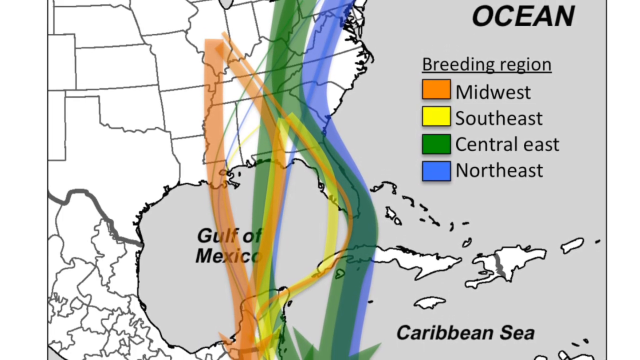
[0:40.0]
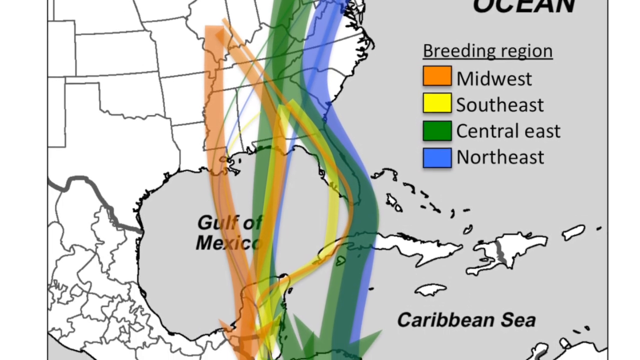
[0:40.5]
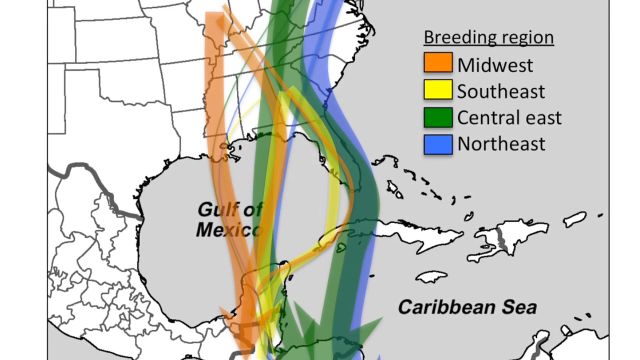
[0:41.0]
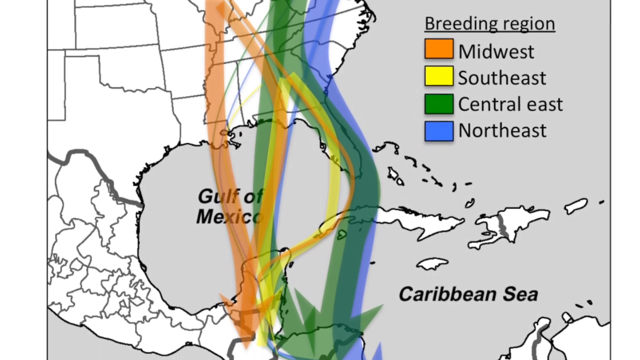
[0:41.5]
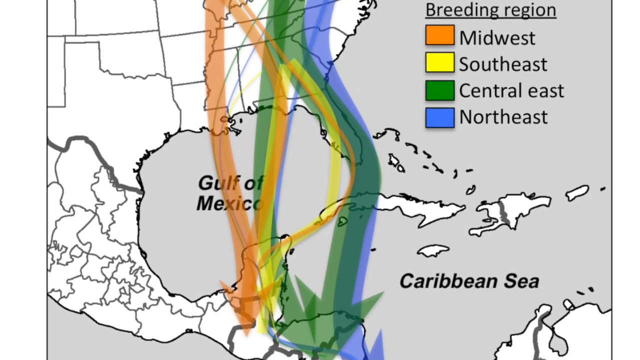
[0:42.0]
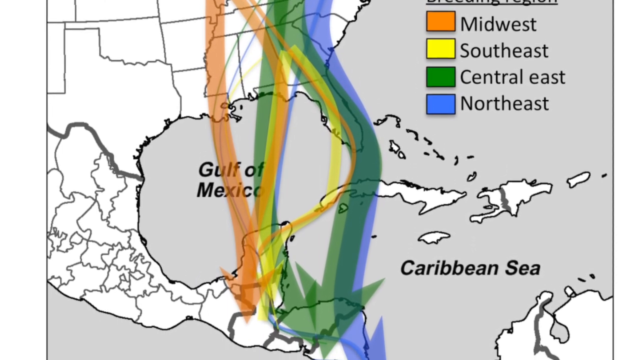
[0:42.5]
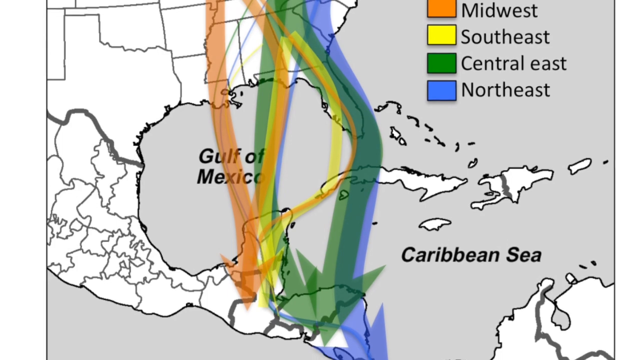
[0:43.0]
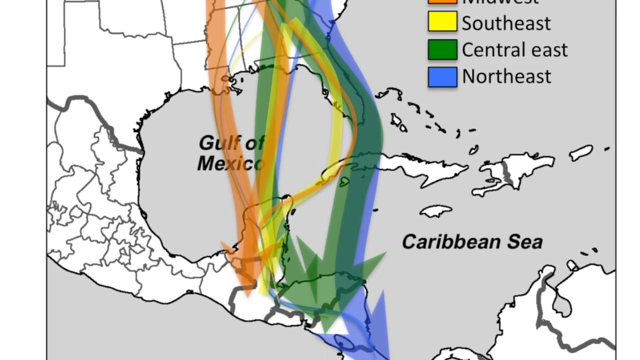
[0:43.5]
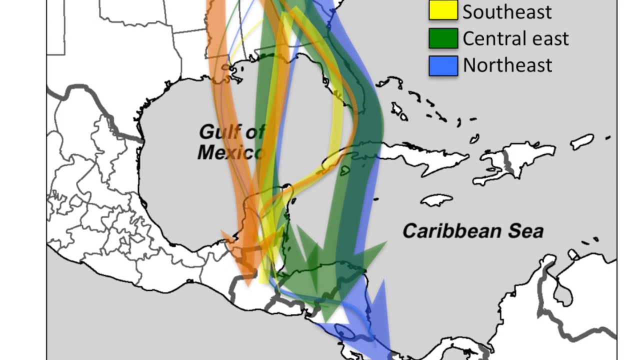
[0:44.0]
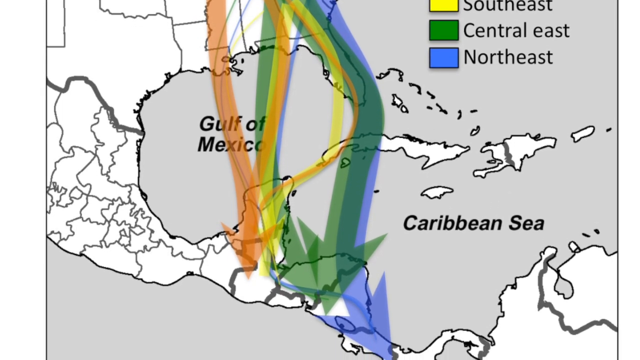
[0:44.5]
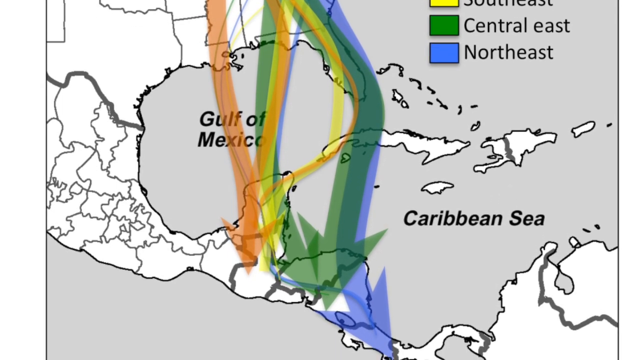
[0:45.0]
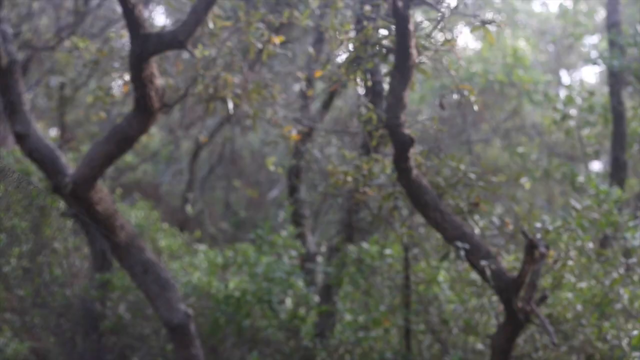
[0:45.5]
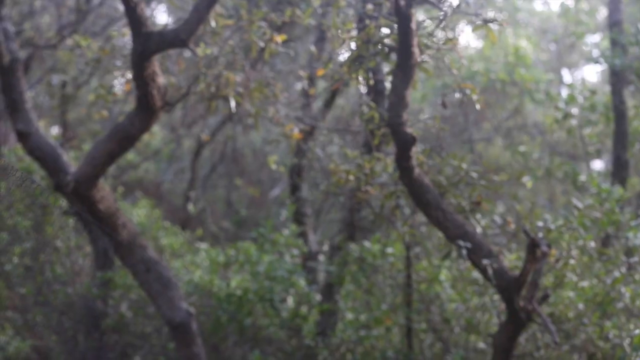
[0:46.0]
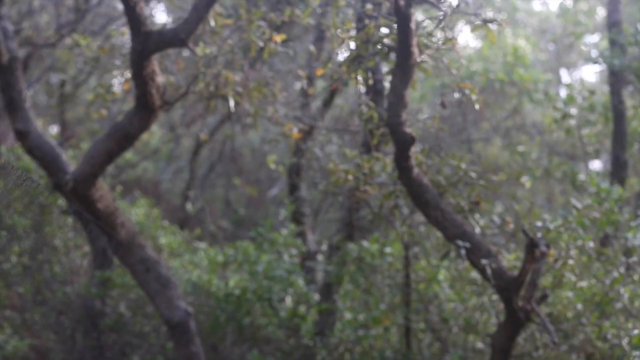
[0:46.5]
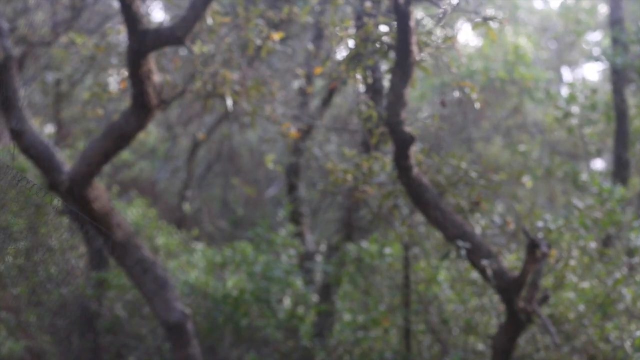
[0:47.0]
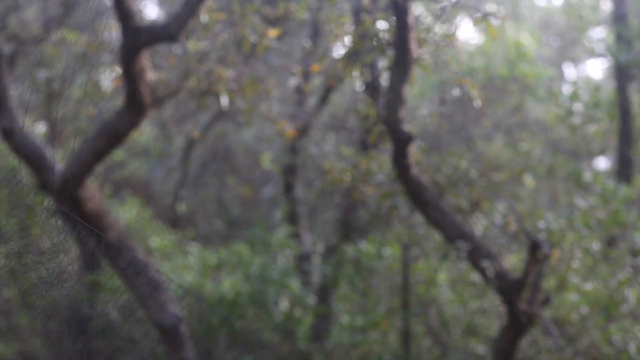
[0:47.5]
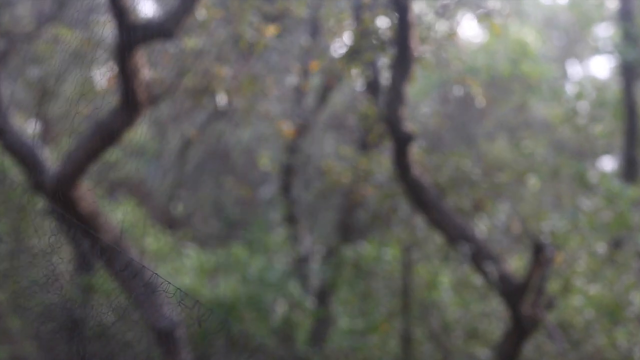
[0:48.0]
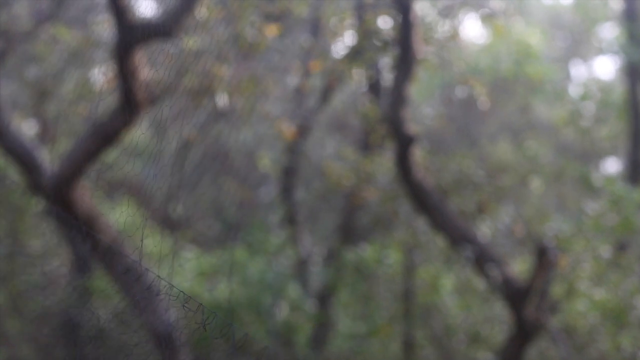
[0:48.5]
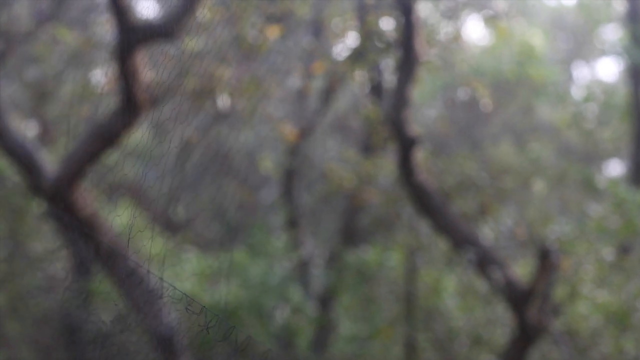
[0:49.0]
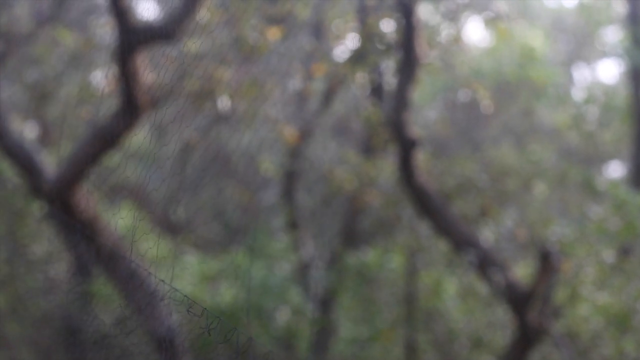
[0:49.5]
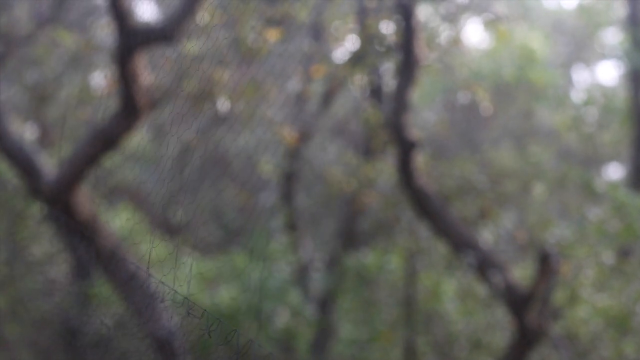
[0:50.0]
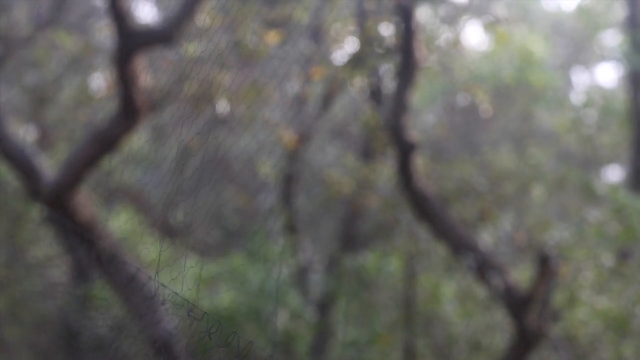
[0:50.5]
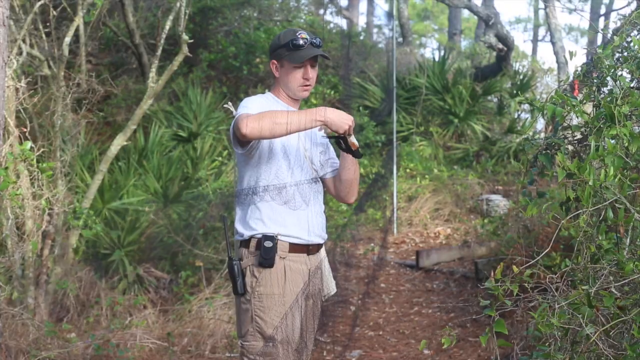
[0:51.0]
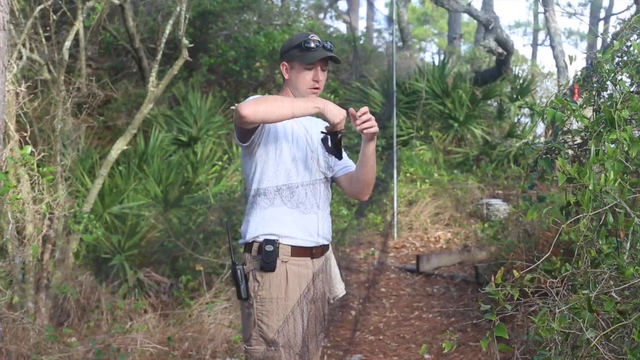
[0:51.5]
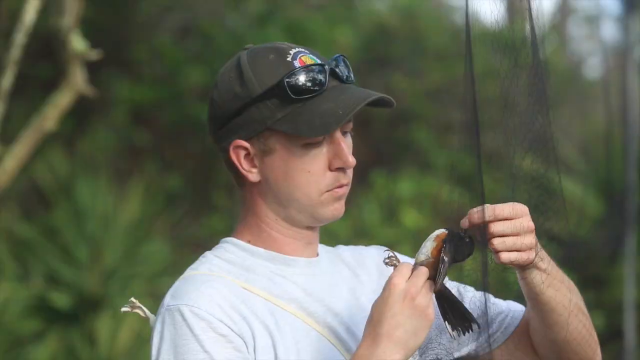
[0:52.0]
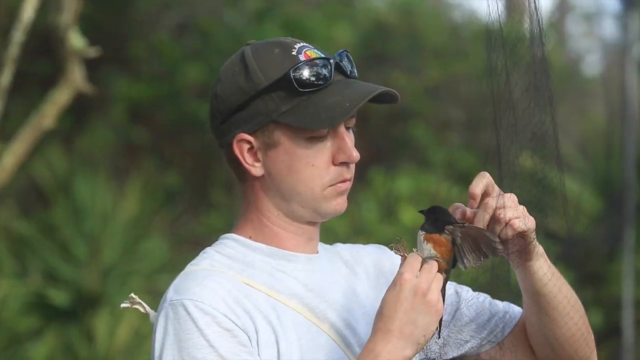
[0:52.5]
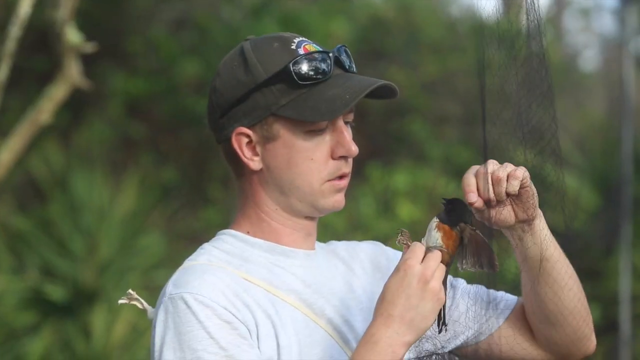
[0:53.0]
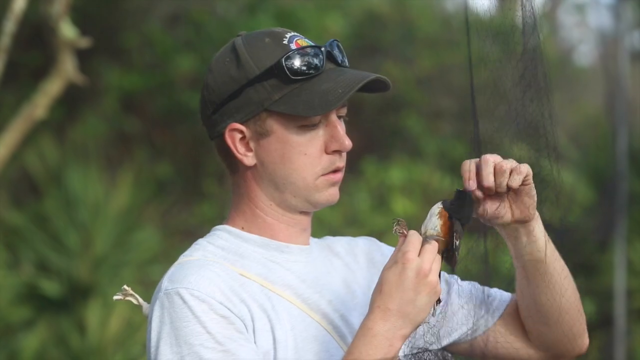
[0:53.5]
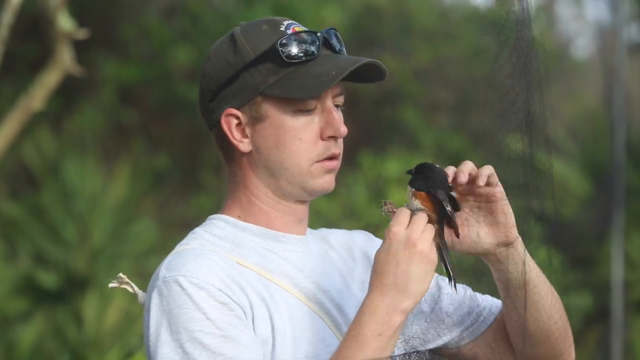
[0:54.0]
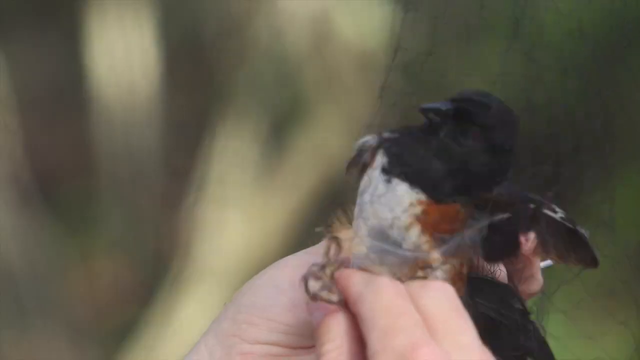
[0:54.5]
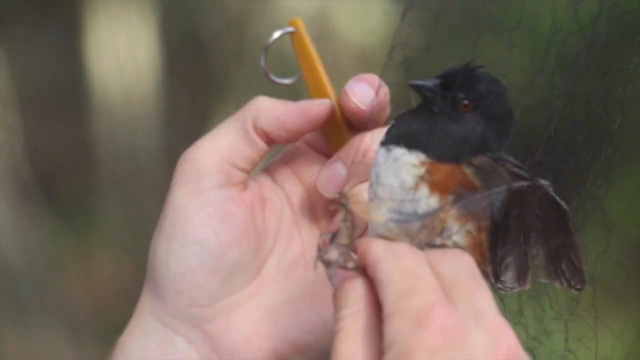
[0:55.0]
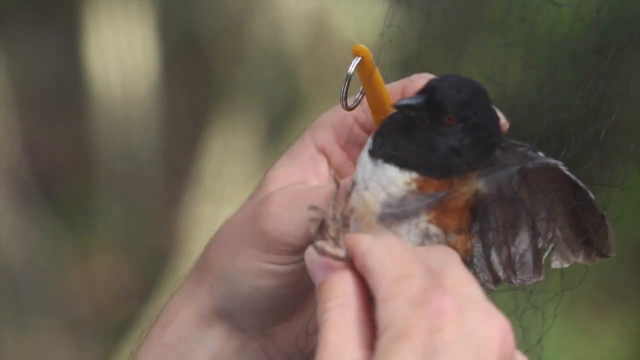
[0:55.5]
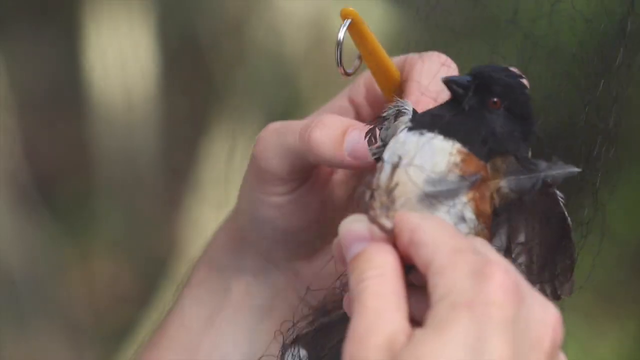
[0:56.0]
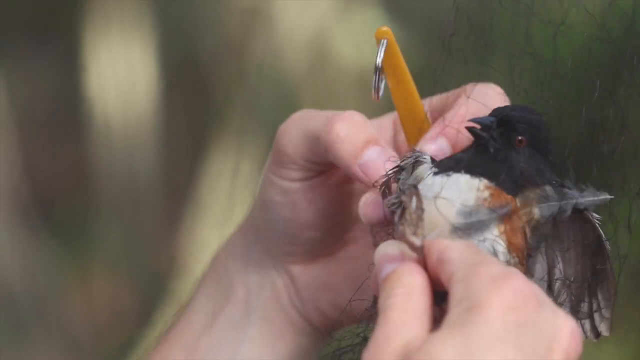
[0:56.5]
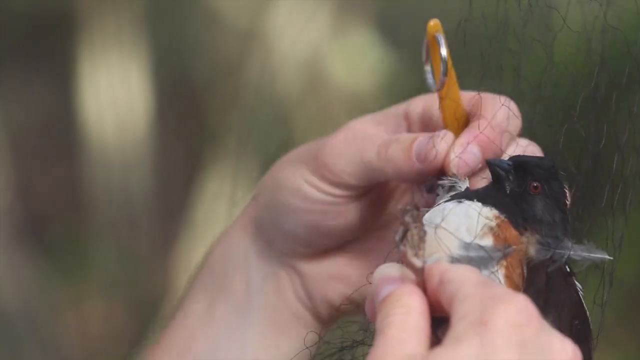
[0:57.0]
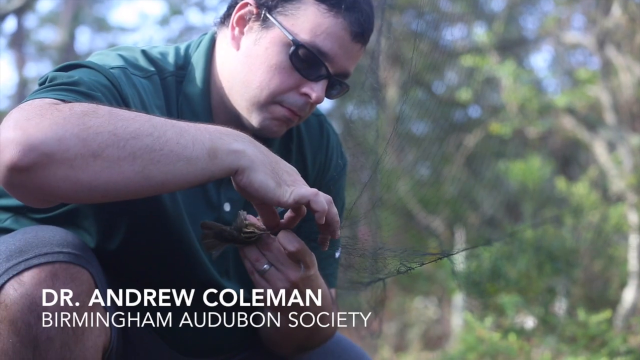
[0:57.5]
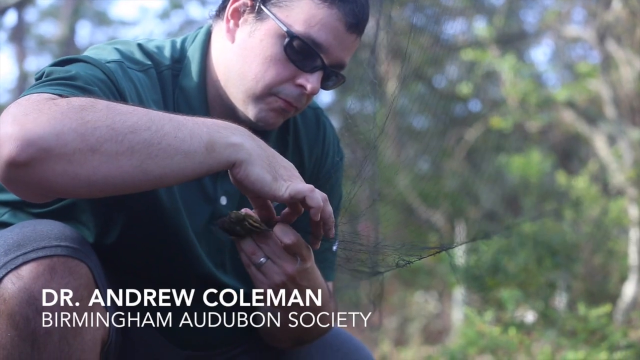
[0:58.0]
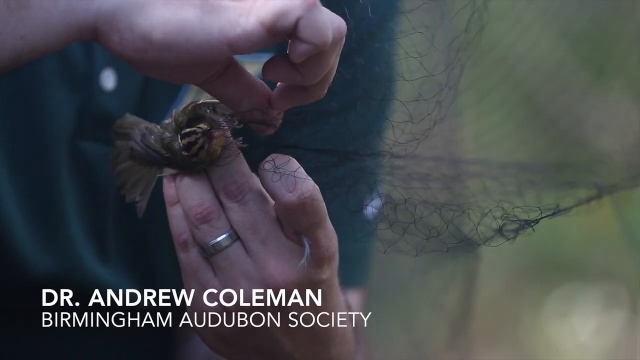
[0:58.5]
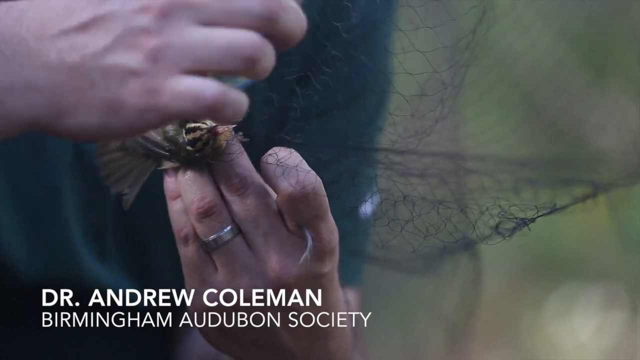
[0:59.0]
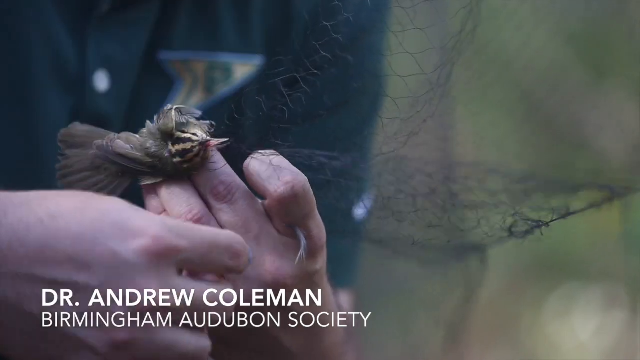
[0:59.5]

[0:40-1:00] The same map shows Mexico, the Atlantic Ocean and the Caribbean Sea. In a forest, a trap has been set; it looks a bit blurry. A young man wearing a cap, a white t-shirt and spectacles rescues another bird from a net. Dr. Andrew Conant, from Birmingham Audubon Society, holds a bird as he rescues it from the net it is caught in. Probably around 100 birds are stuck in the nets, trying to get out. The map is still visible, its direction changed a little, growing toward the Gulf of Mexico and the Atlantic Ocean.